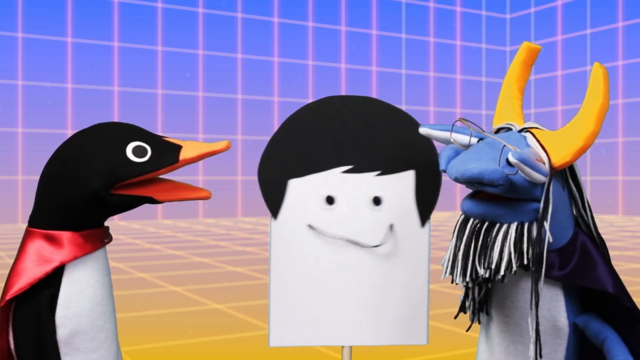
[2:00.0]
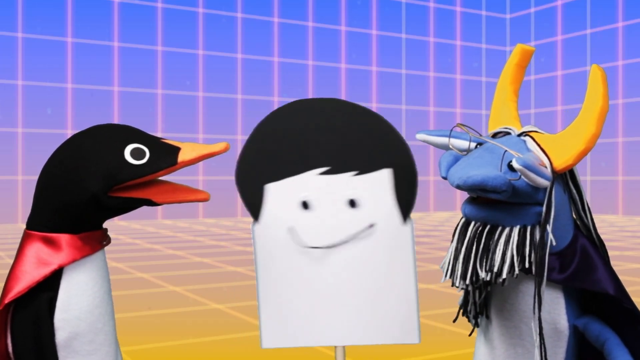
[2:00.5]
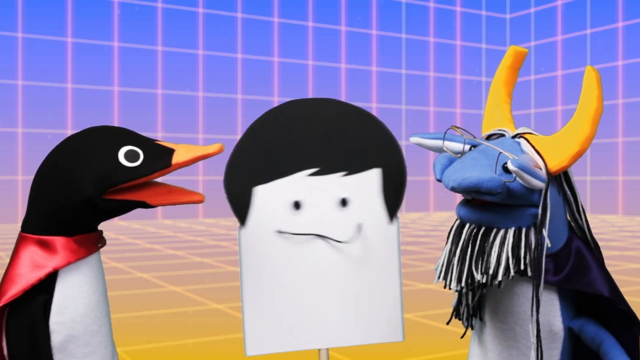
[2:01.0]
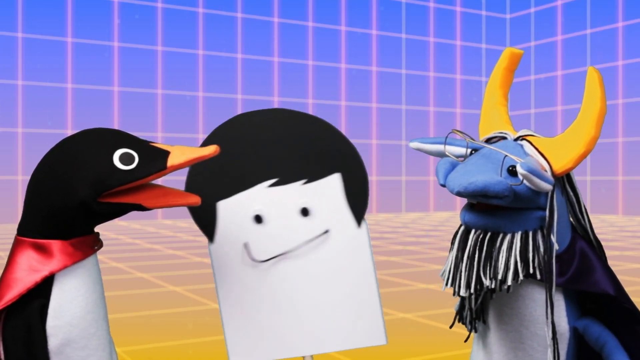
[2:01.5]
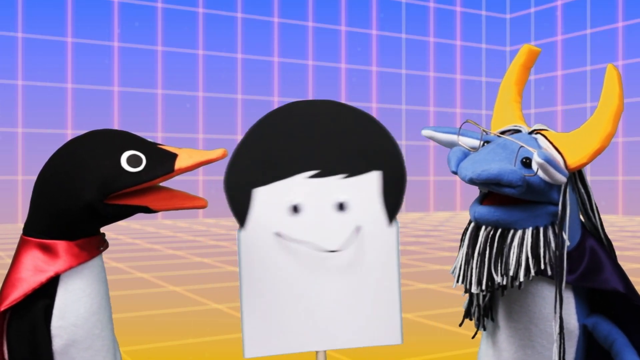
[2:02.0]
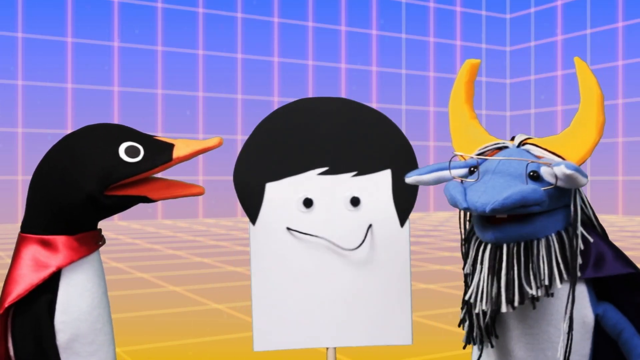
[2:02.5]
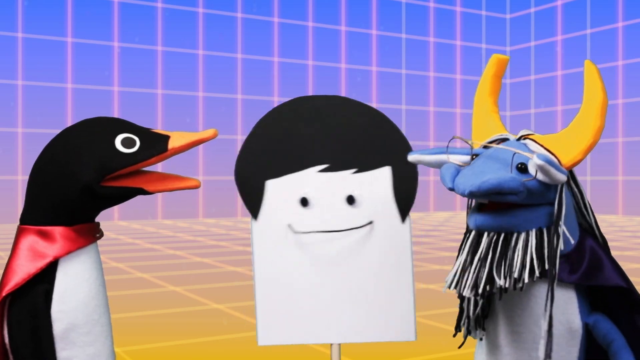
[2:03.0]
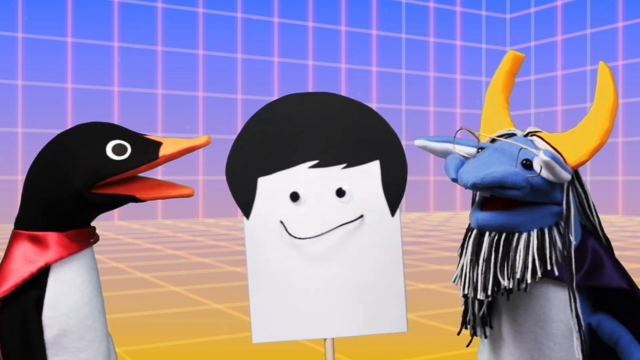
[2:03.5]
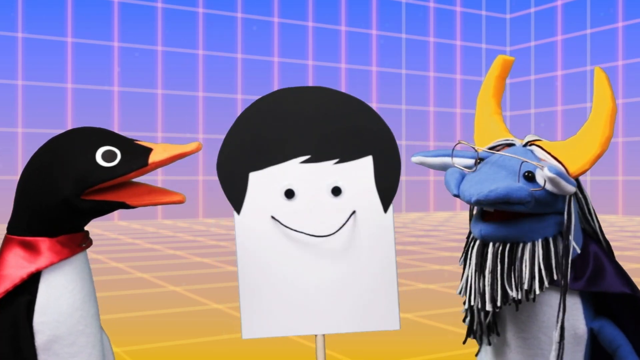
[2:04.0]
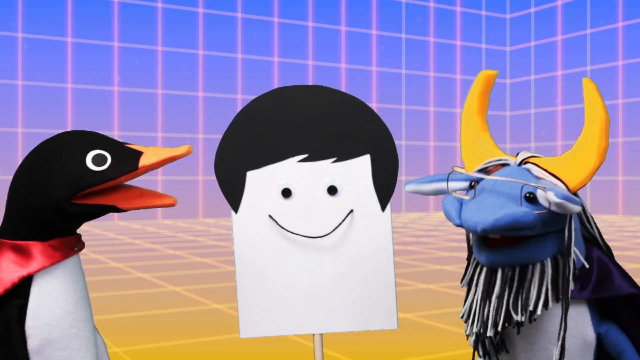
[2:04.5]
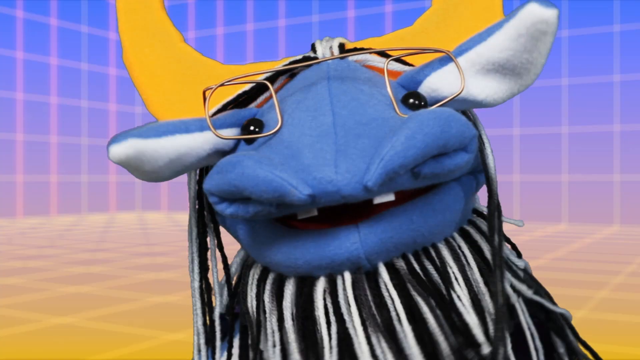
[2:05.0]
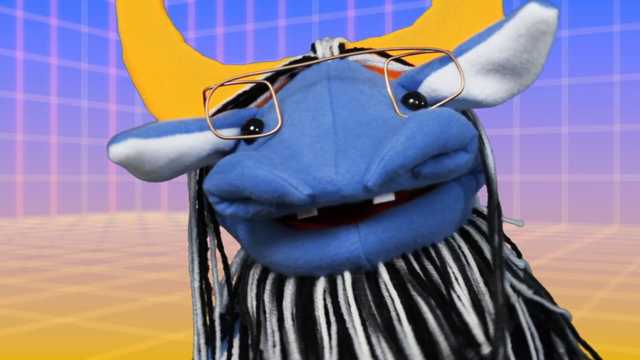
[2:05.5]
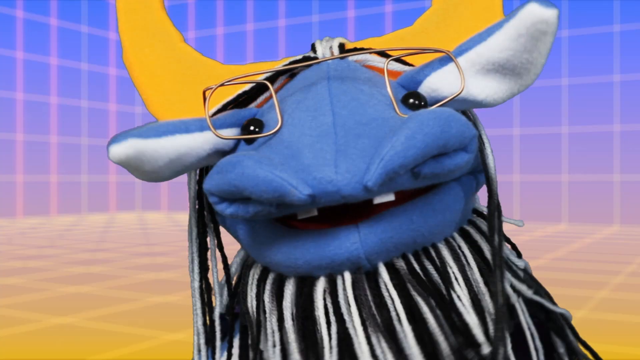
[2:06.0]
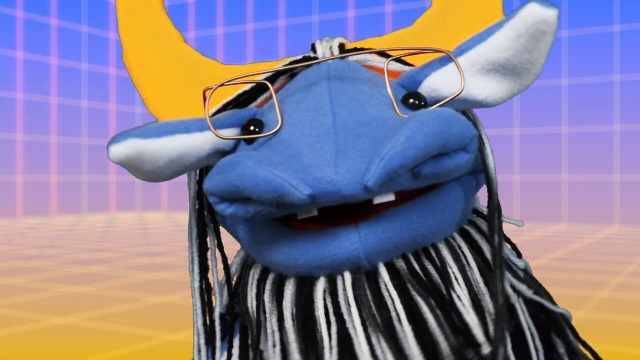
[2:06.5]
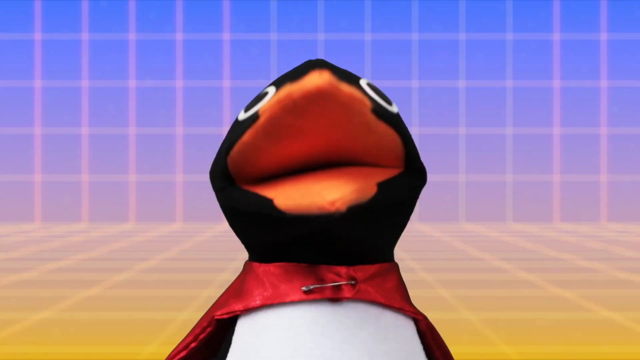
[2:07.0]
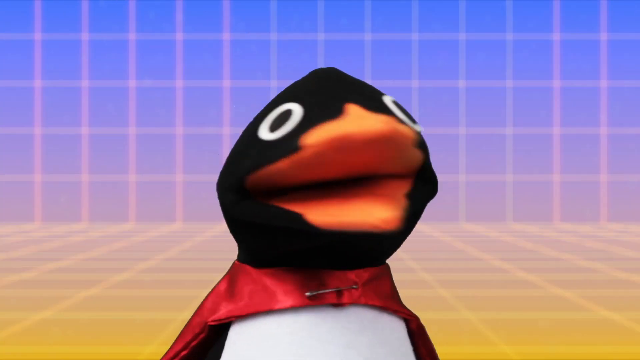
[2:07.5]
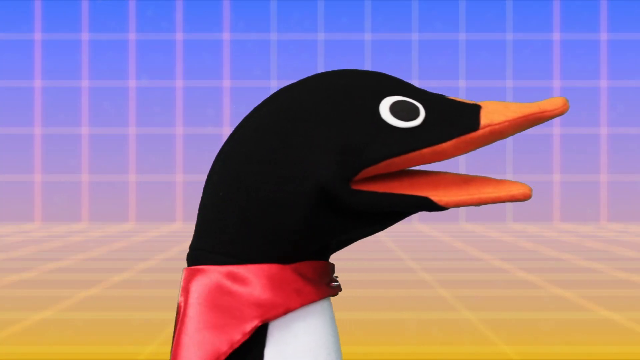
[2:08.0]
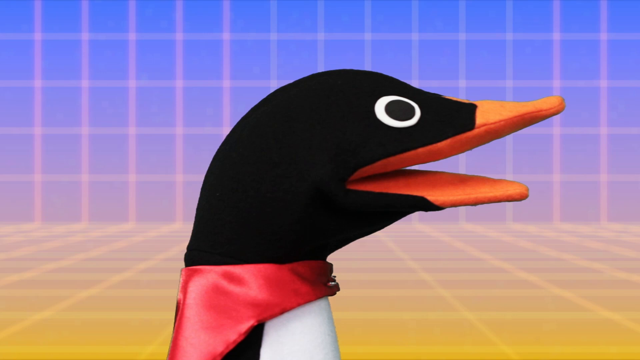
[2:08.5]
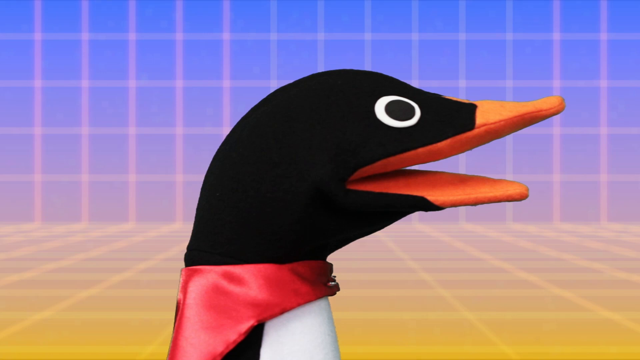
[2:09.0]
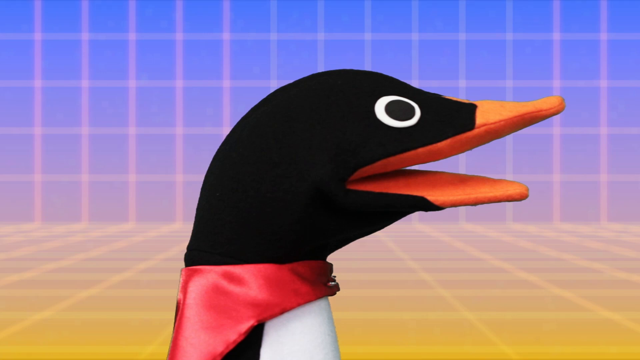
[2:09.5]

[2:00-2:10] The penguin and the gnu look at the signpost man, who waggles back and forth quite a bit, his yarn mouth shaking and moving around a lot. The camera zooms in on the gnu as it turns its head to look directly at the camera and holds still for a while, as if dumbfounded. The penguin nods at the camera, then turns to its left to look over at the other two and stays still for a while, not moving.